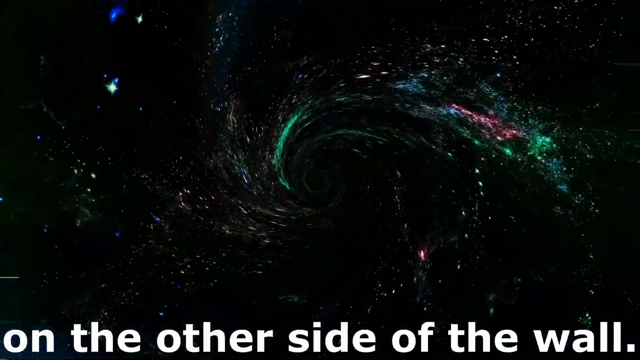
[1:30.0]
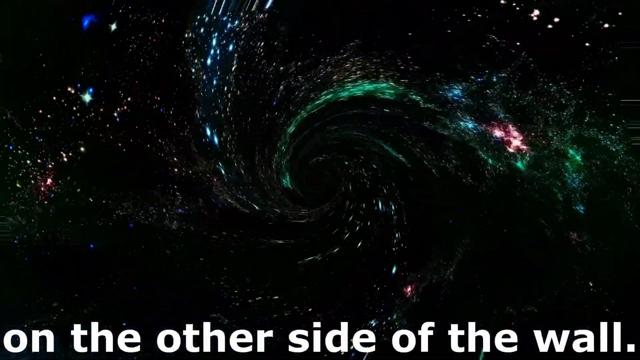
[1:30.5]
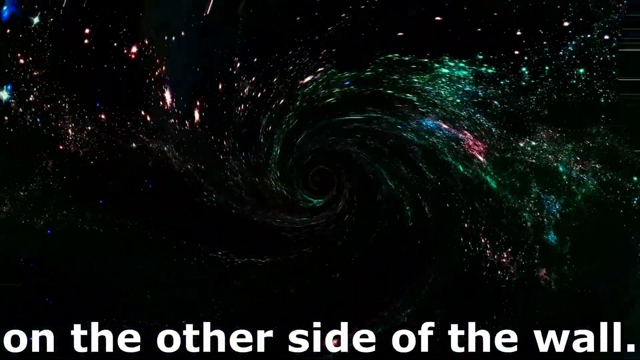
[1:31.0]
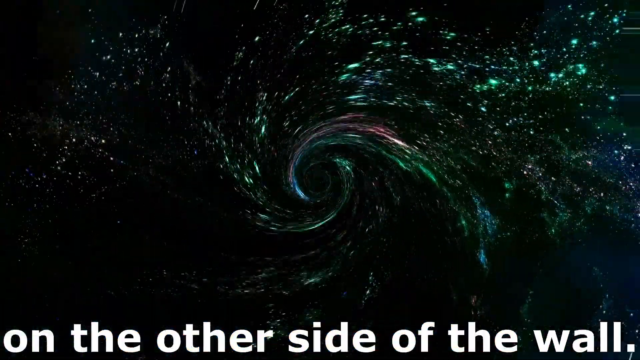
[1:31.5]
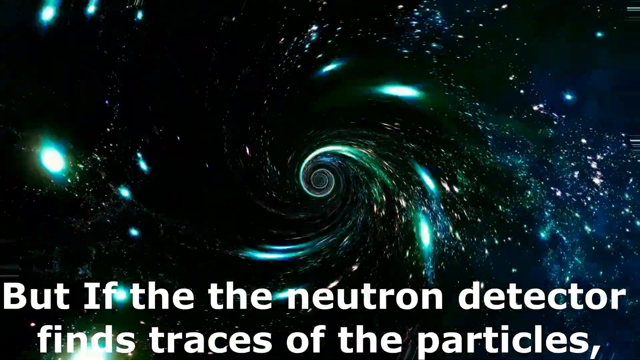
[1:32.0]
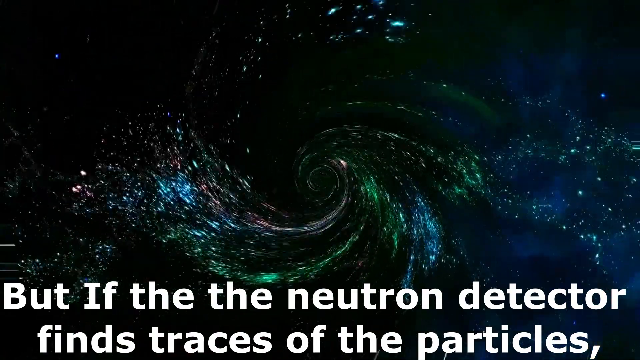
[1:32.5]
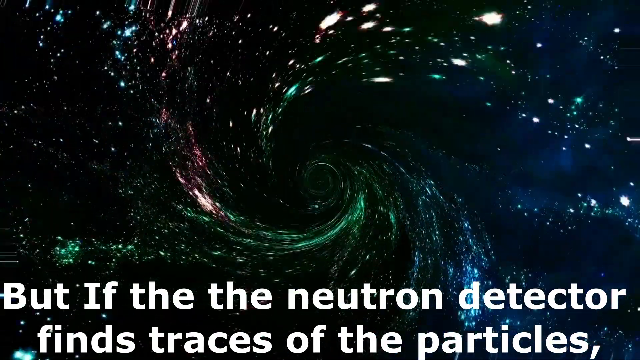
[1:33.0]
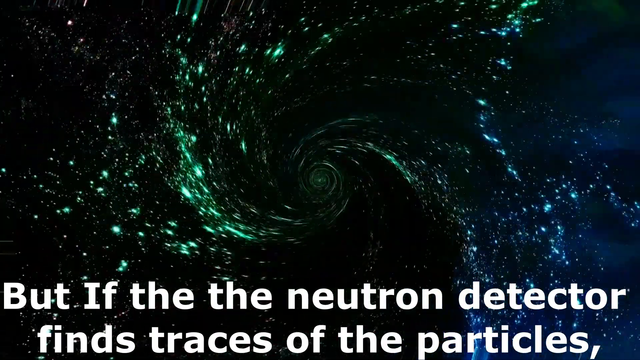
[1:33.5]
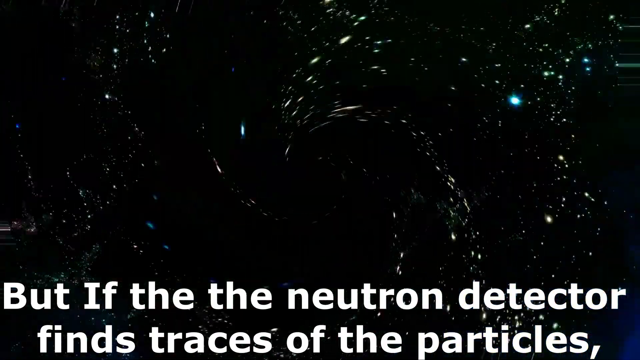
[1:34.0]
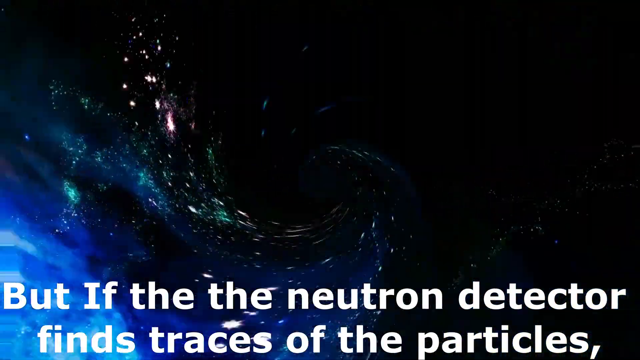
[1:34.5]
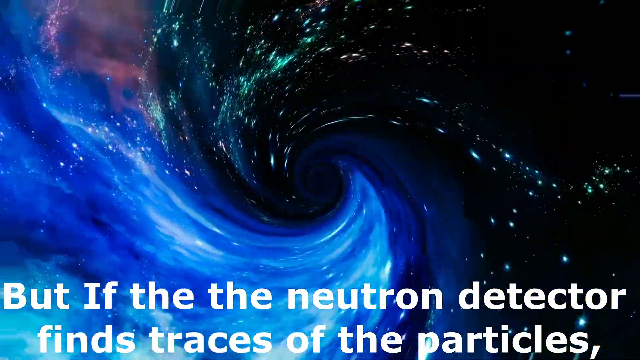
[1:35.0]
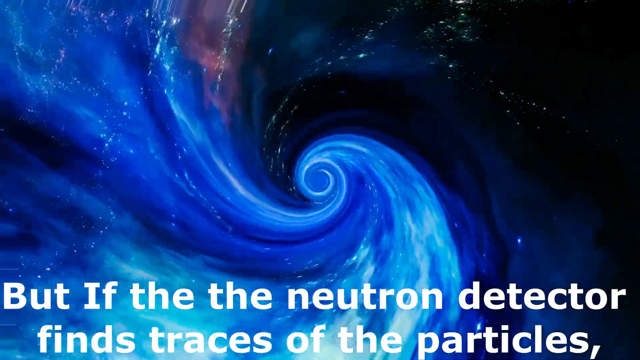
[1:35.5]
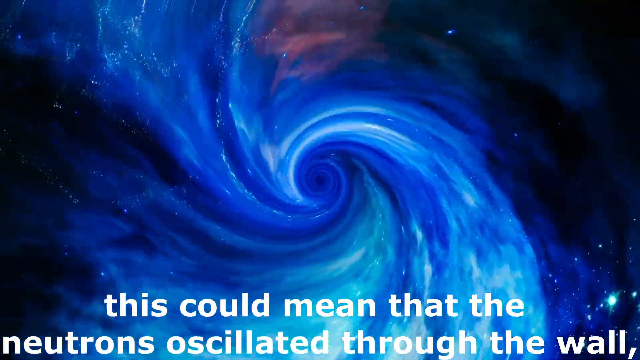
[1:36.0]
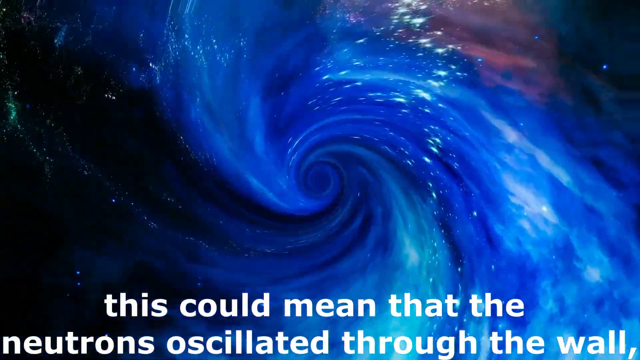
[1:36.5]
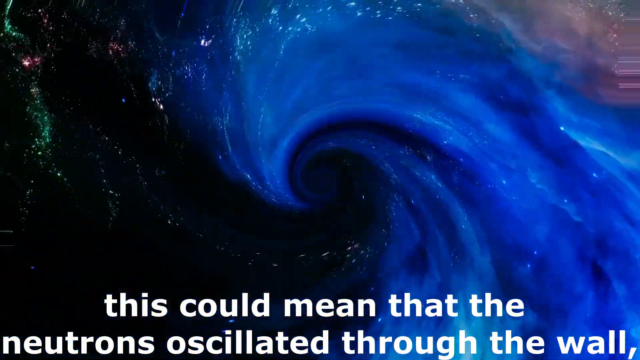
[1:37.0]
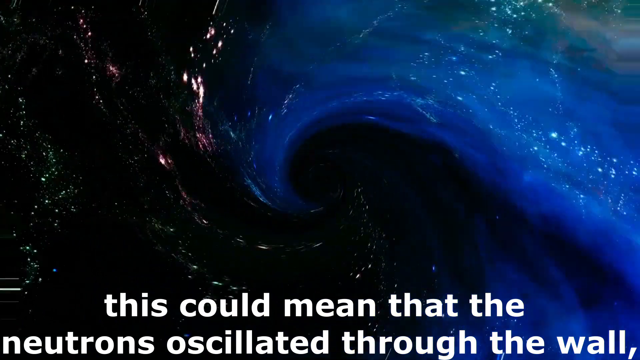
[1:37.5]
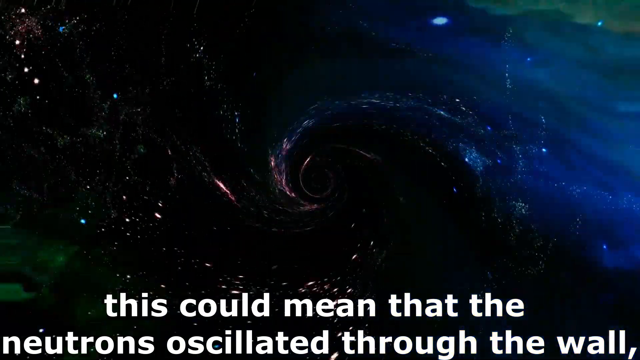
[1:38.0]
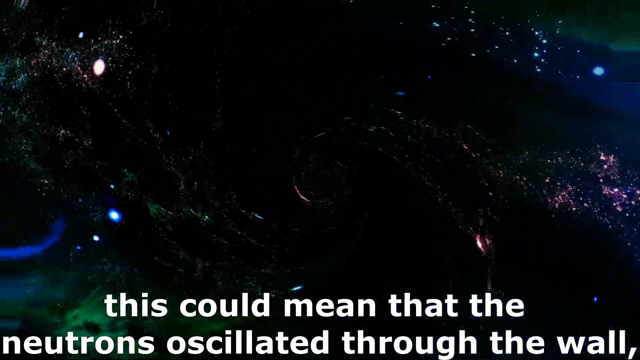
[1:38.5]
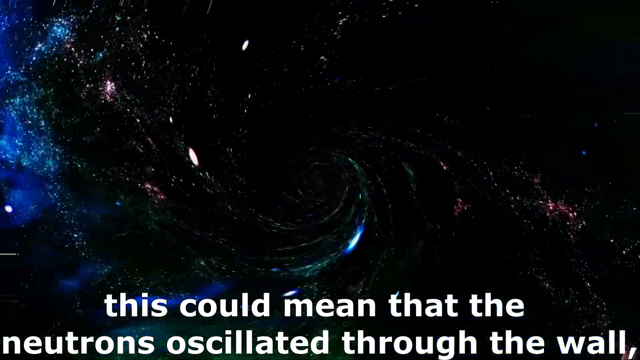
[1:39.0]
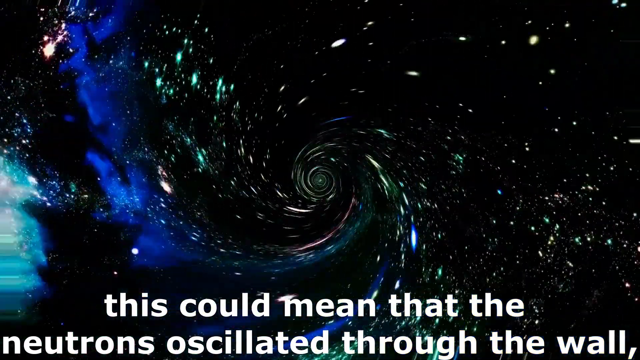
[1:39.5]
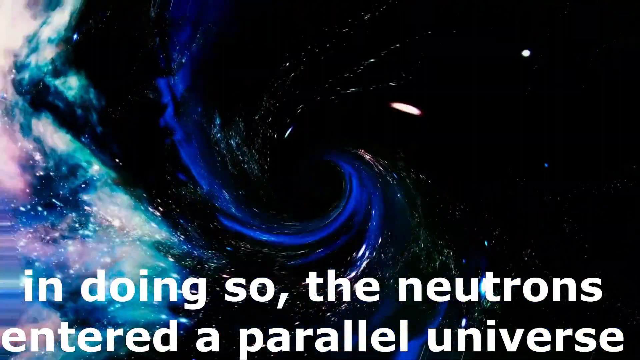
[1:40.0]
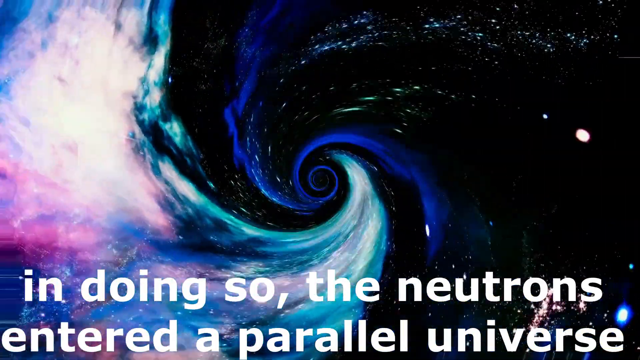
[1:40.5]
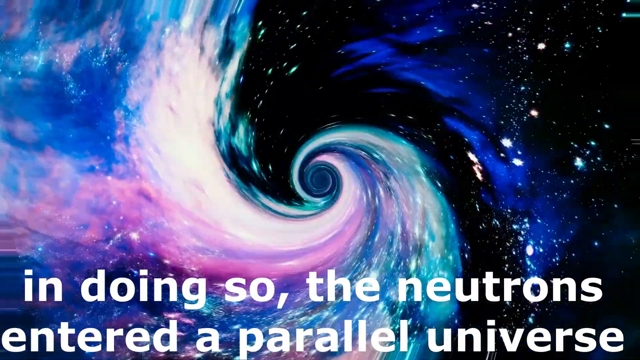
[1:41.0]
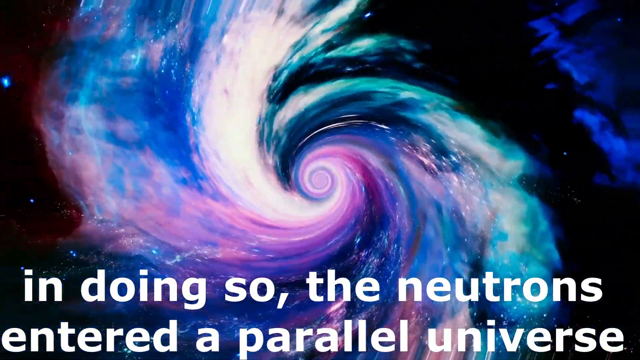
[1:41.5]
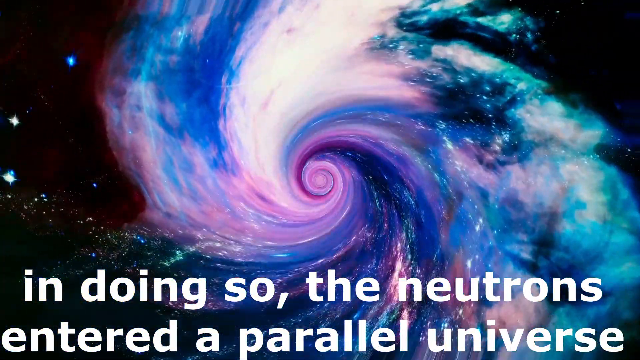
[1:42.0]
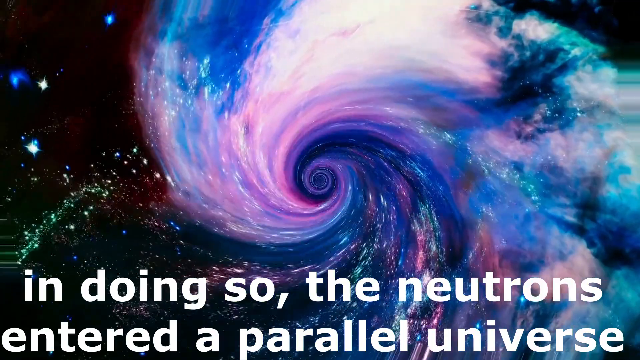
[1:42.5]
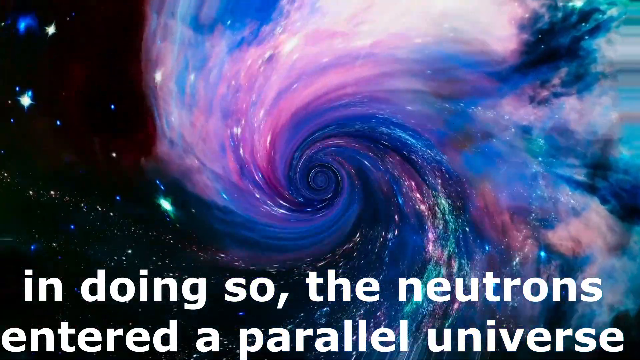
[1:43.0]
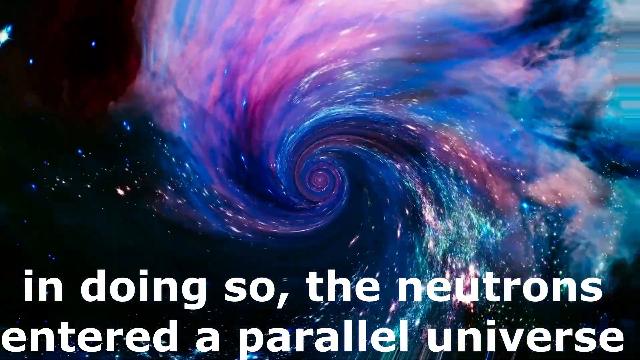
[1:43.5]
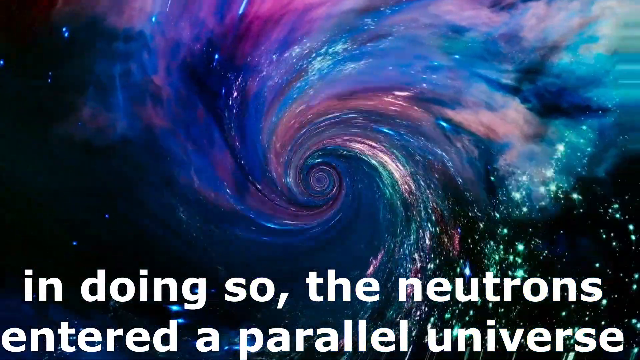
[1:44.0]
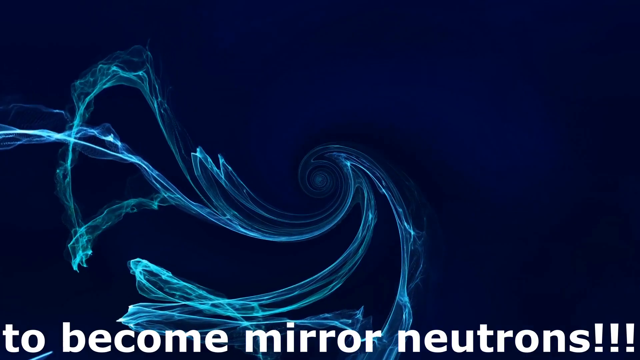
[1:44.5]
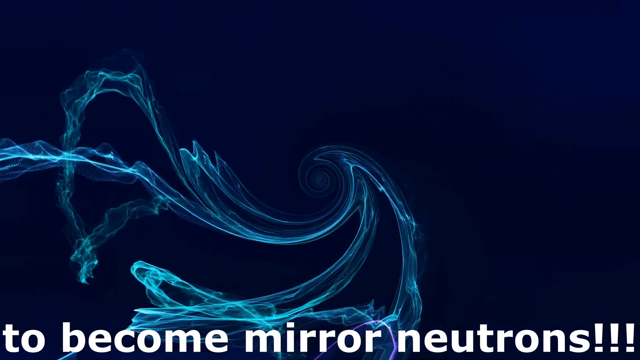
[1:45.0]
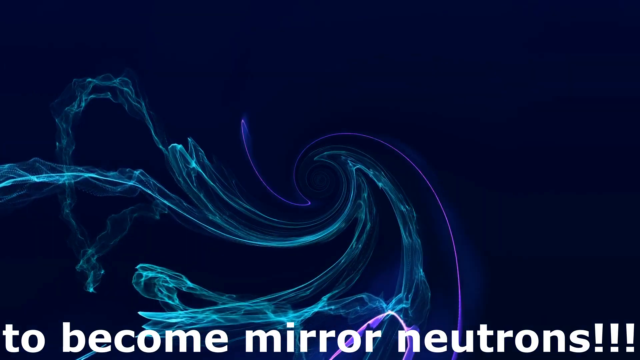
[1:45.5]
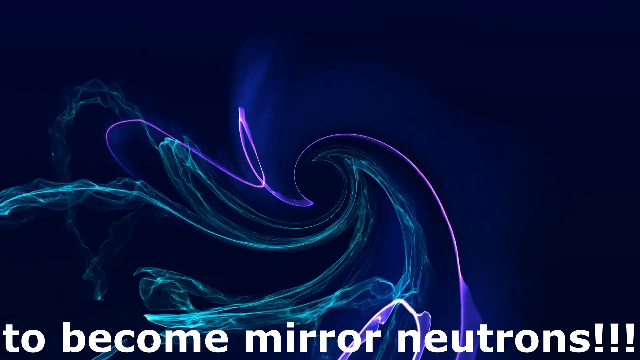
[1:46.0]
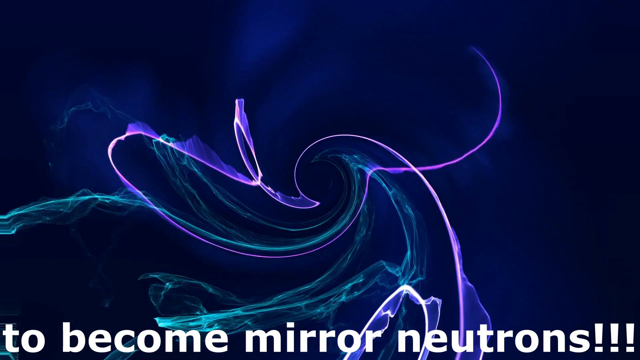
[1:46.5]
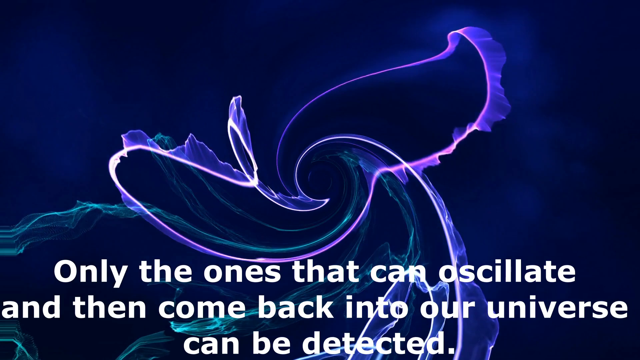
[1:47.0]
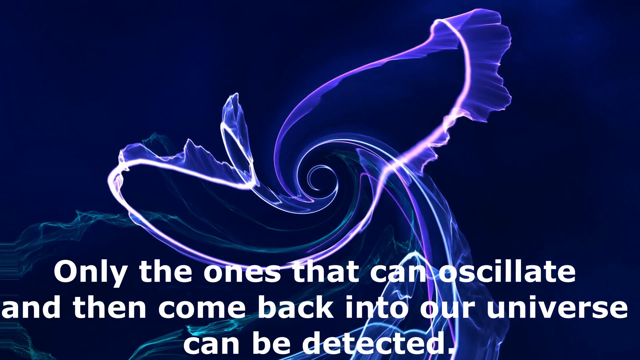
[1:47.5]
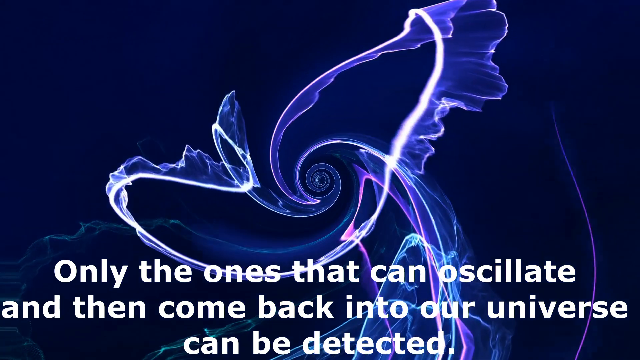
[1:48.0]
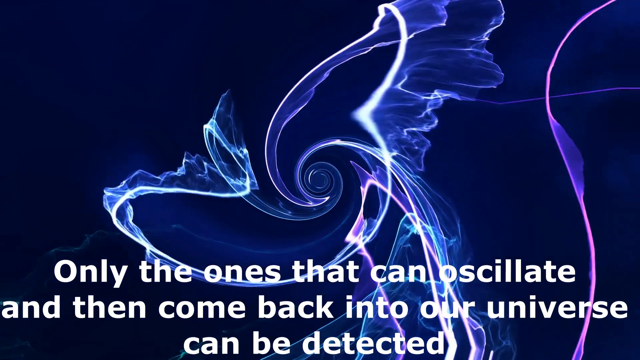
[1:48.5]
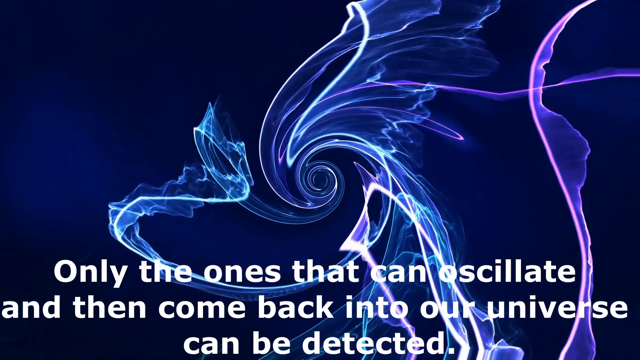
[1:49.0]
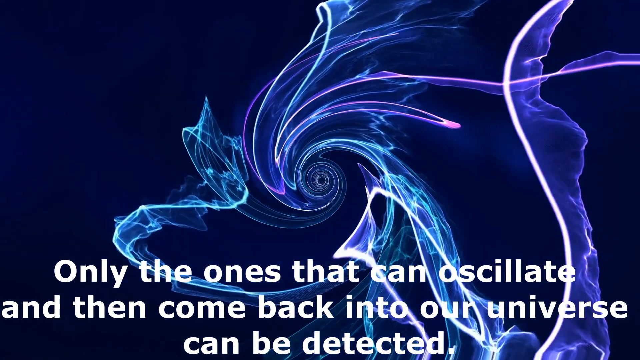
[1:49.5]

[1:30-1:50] A spiral forms in the middle, as if in the universe or a galaxy, showing many different colors: green, blue and light blue. Captions at the bottom read: "but if the neutron detector finds traces of the particles This could mean that the neutrons oscillated through the wall. In doing so, the neutrons entered a parallel universe to become mirror neutrons. Only the ones that can oscillate and then come back into our universe can be detected." The spiral in the middle keeps moving very quickly amid colorful lighting, looking like it is moving within the universe or a galaxy. More spiral-like images follow on a dark blue background, with spinning white lines and light blue, blue and light purple colors.